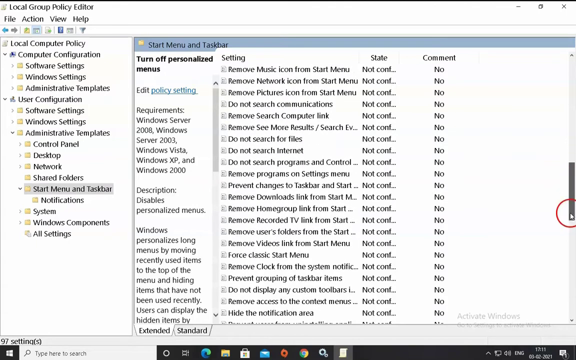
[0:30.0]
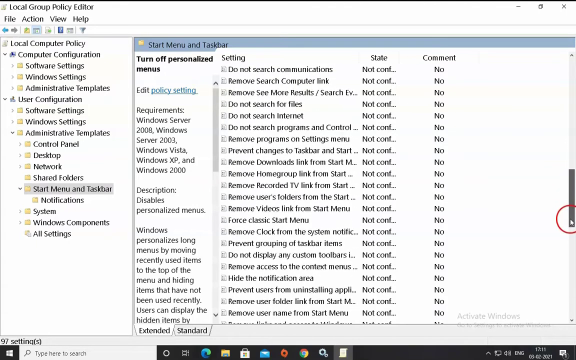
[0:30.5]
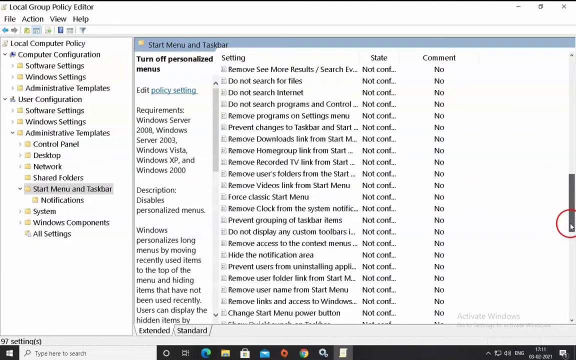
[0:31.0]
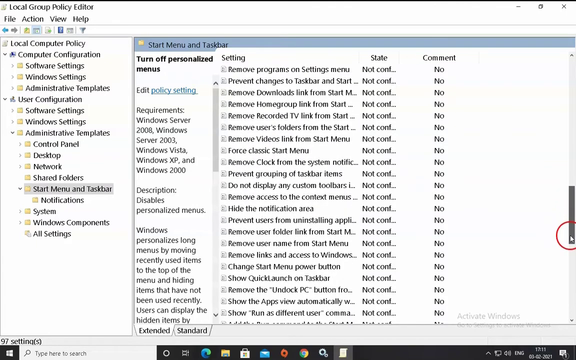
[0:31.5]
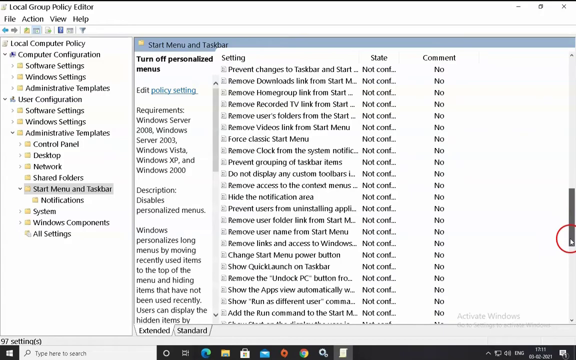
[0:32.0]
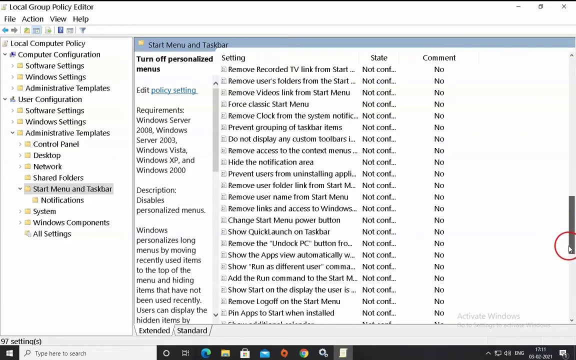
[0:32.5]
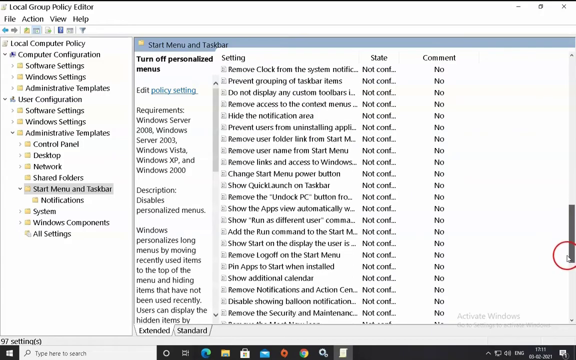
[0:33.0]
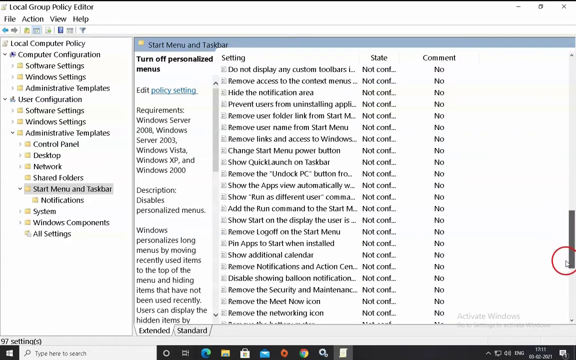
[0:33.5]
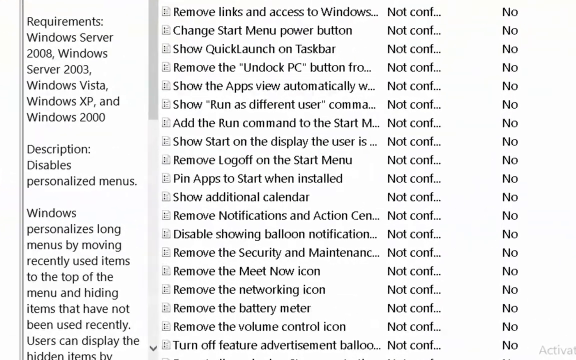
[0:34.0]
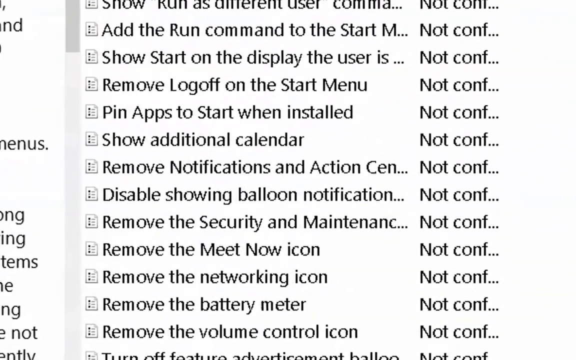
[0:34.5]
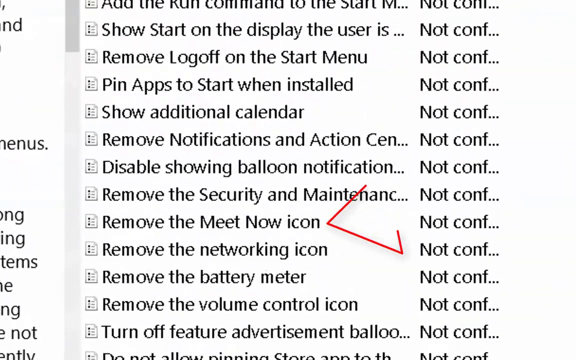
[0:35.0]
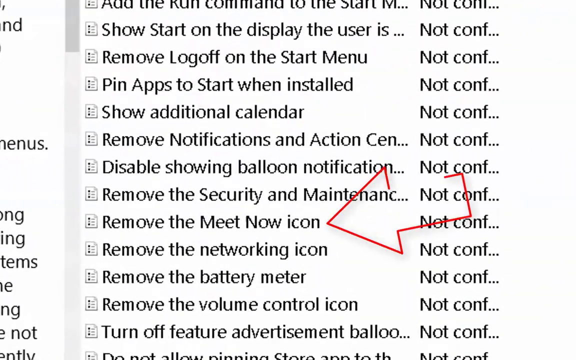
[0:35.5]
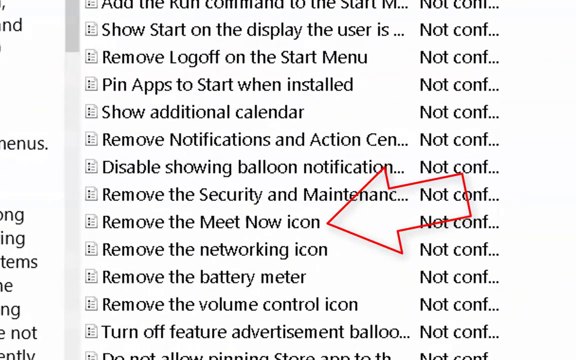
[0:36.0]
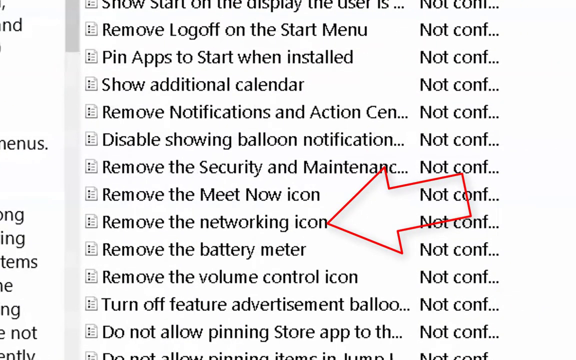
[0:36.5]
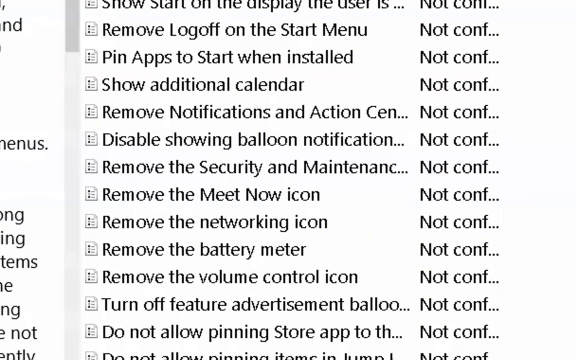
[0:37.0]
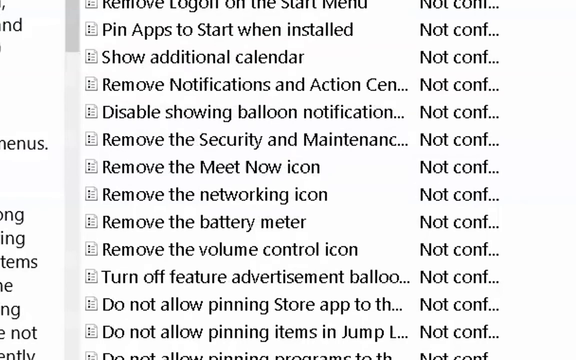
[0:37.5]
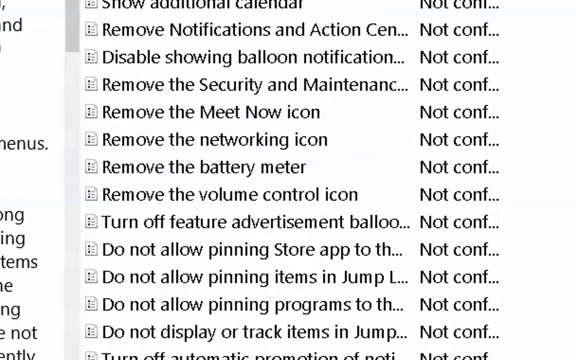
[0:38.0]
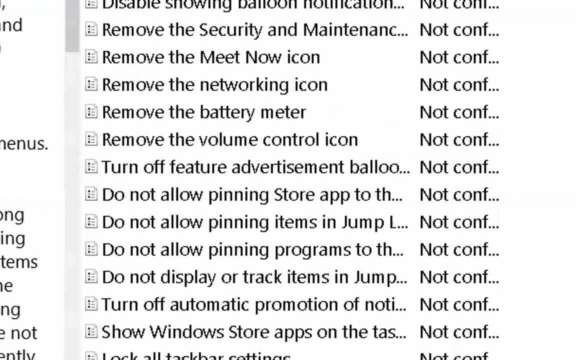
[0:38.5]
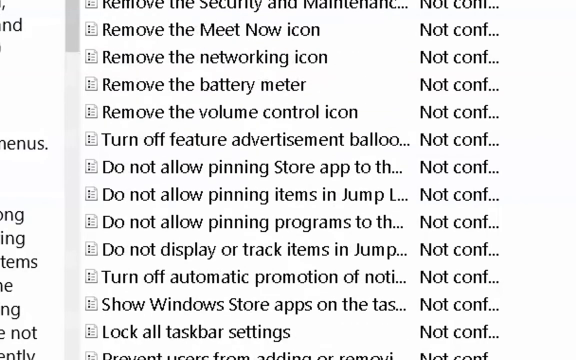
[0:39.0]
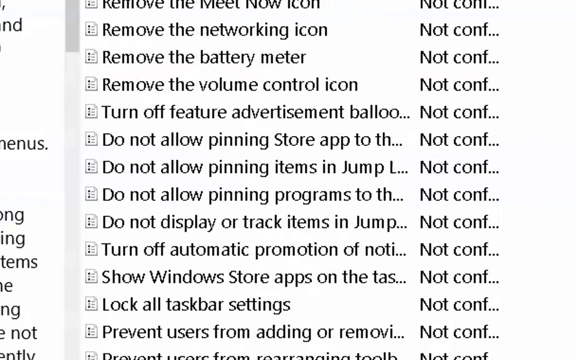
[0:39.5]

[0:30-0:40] On the computer screen, someone scrolls very quickly through many different options. The screen shows files and words such as "remove network icon from start menu," "do not search for files," "do not search internet," "user configuration," "control panel," "desktop," "prevent grouping of taskbar items," and "Windows personalizes long menus by moving recently used items to the top of the menu and hiding items that have not been used recently." Scrolling down, it shows "remove the meet now icon" and "remove the battery meter." The system is Windows Server 2008. It is just one screen of words that does not really change.